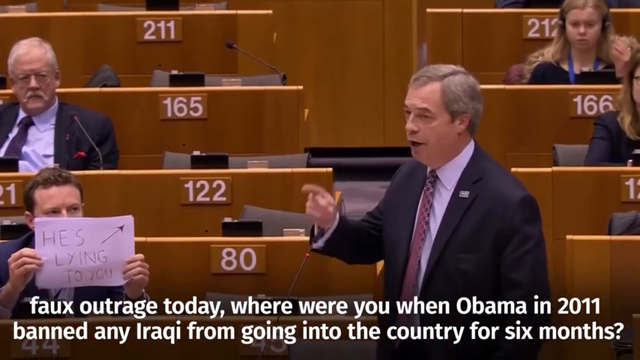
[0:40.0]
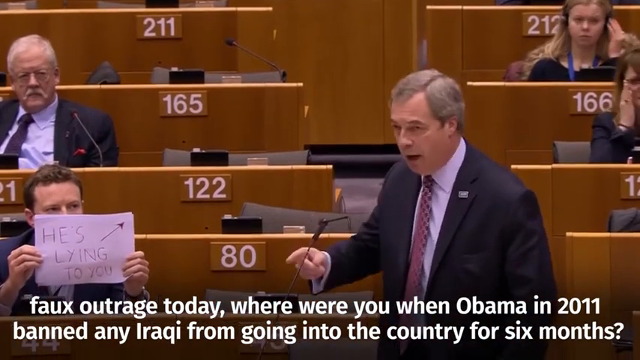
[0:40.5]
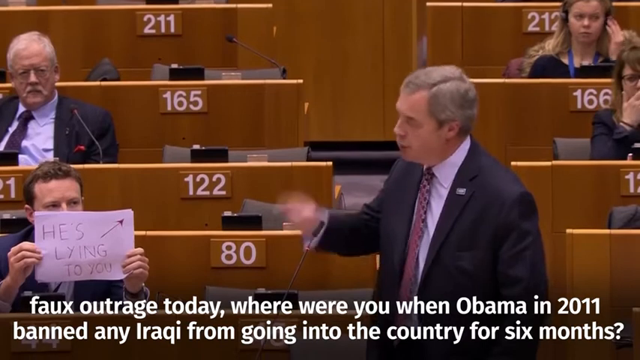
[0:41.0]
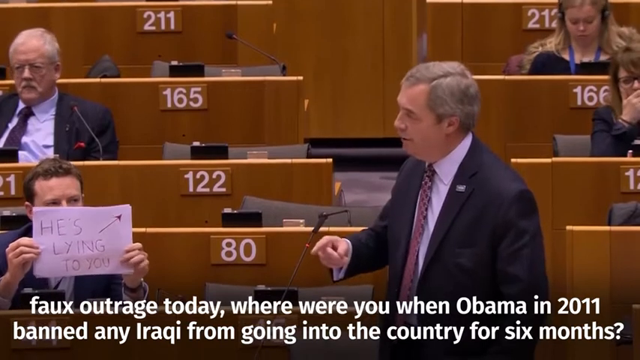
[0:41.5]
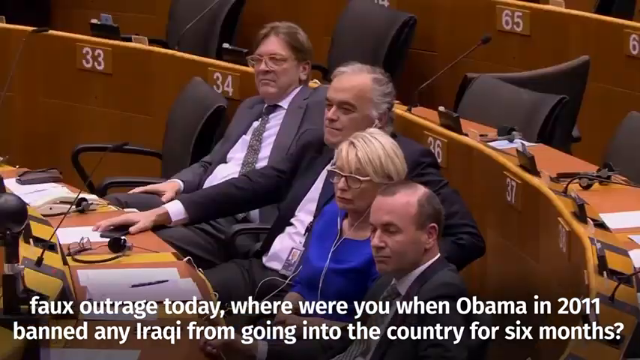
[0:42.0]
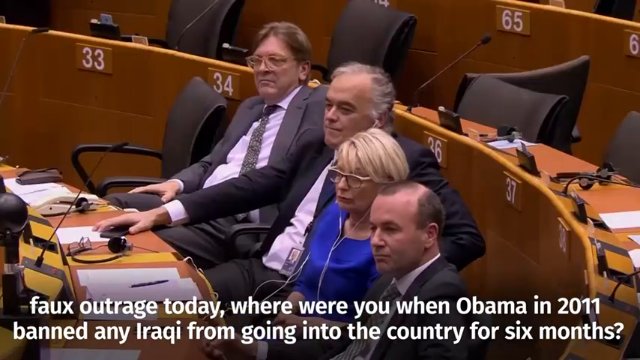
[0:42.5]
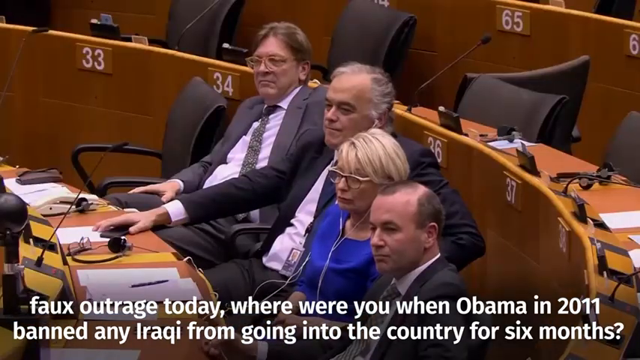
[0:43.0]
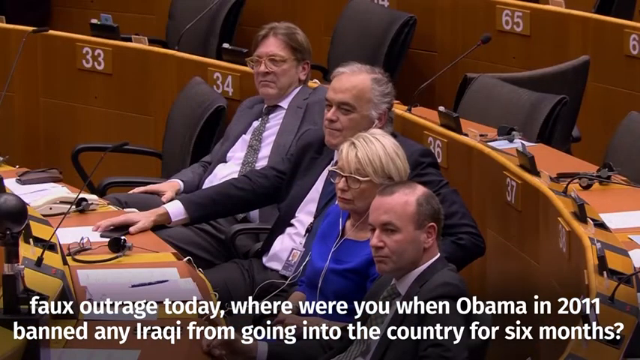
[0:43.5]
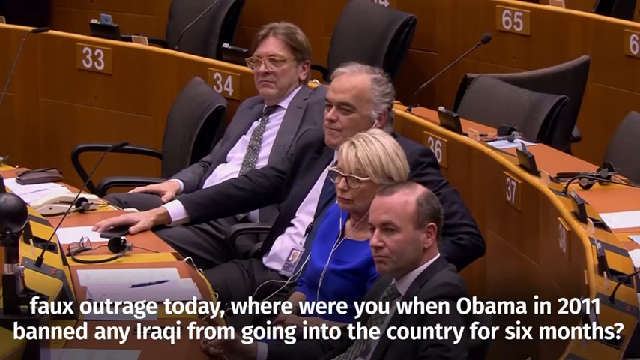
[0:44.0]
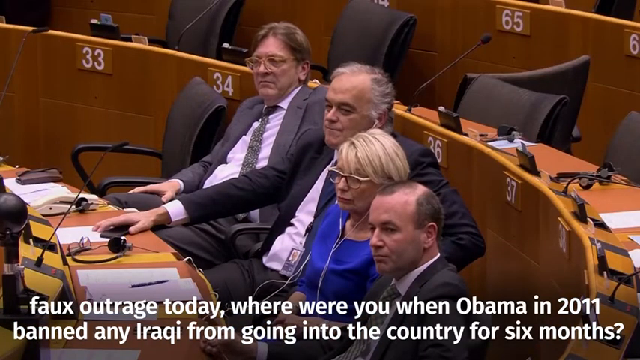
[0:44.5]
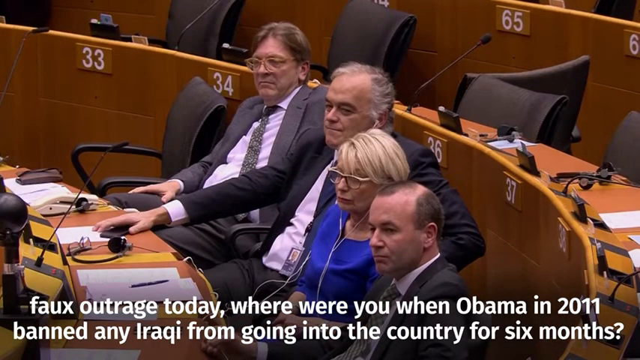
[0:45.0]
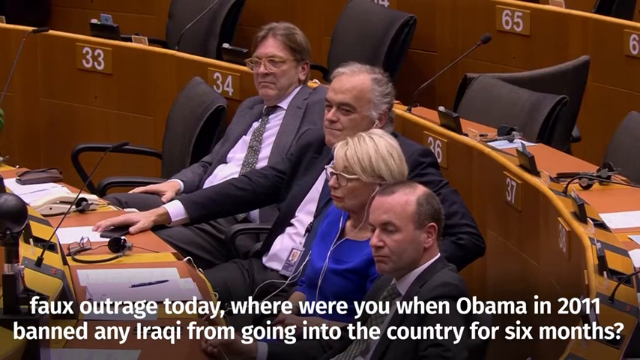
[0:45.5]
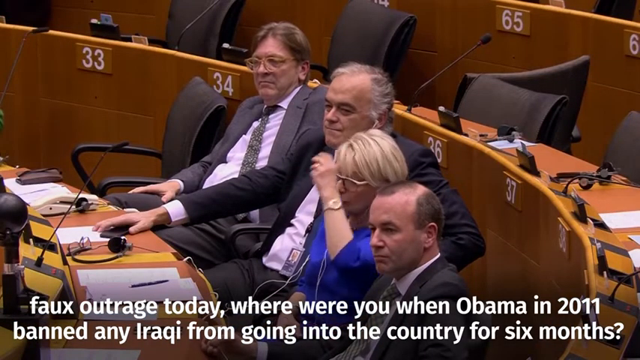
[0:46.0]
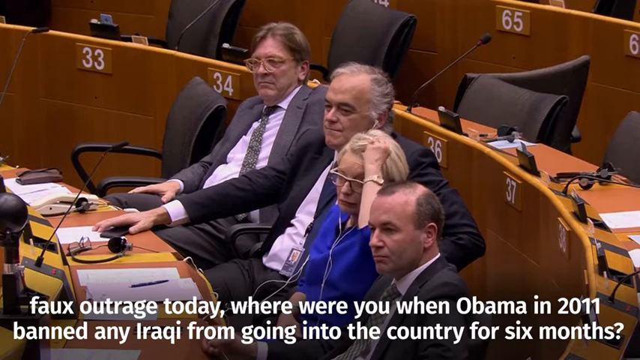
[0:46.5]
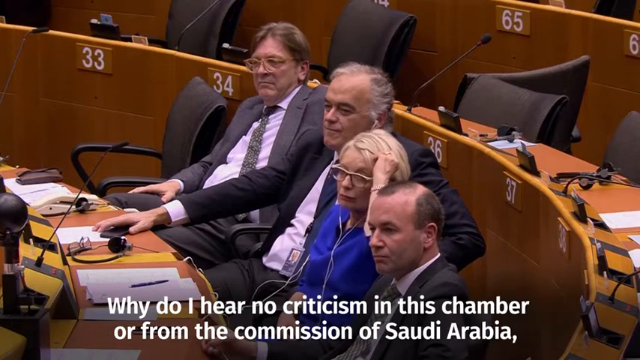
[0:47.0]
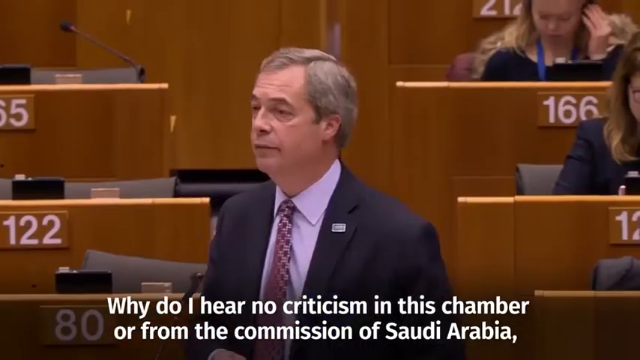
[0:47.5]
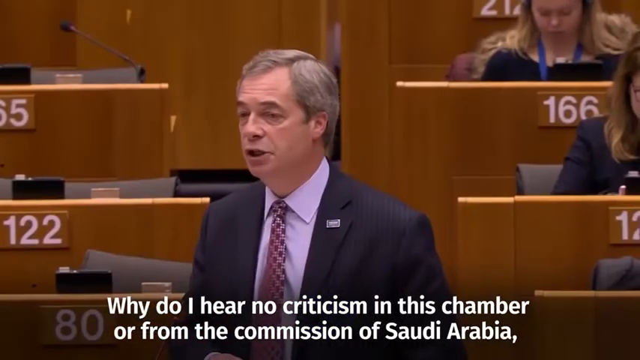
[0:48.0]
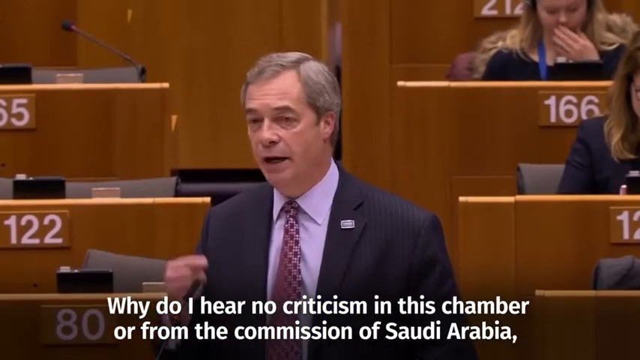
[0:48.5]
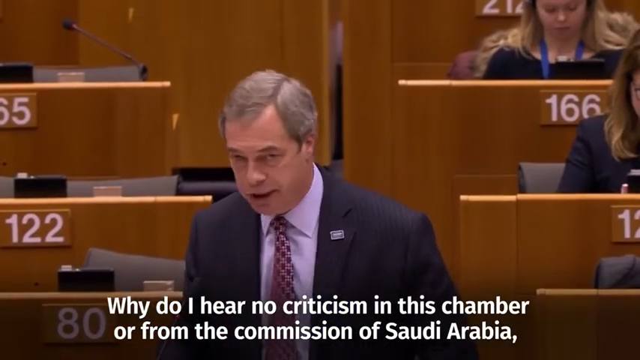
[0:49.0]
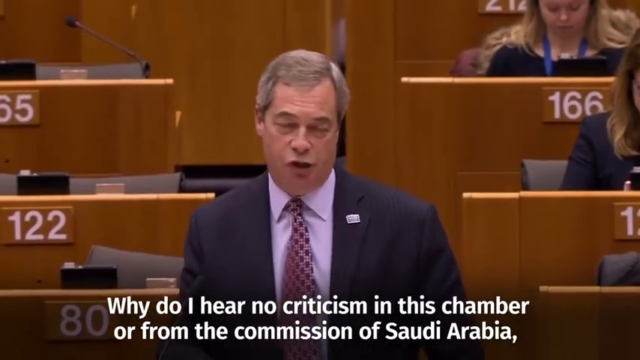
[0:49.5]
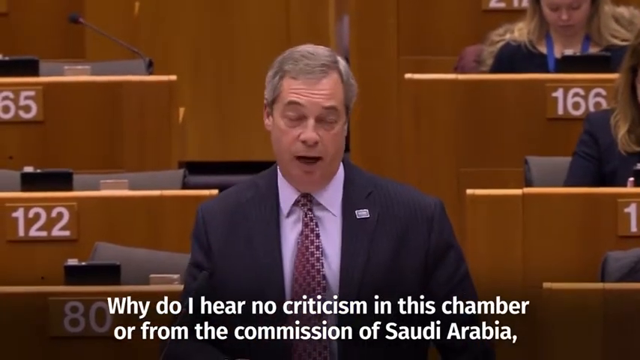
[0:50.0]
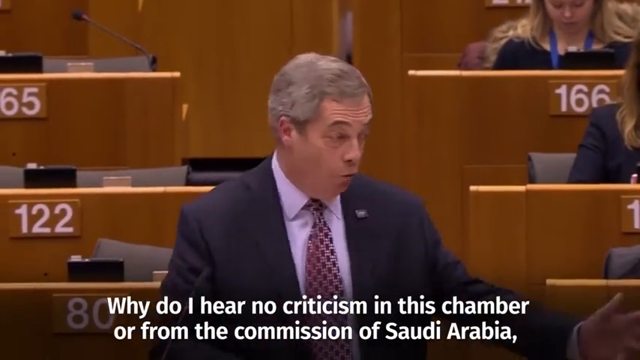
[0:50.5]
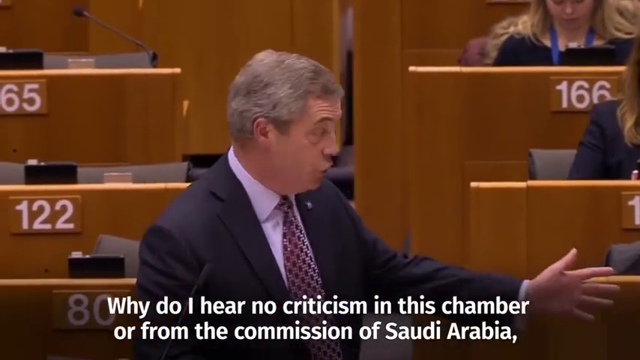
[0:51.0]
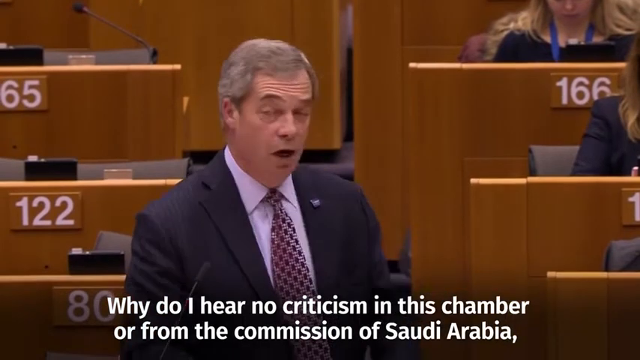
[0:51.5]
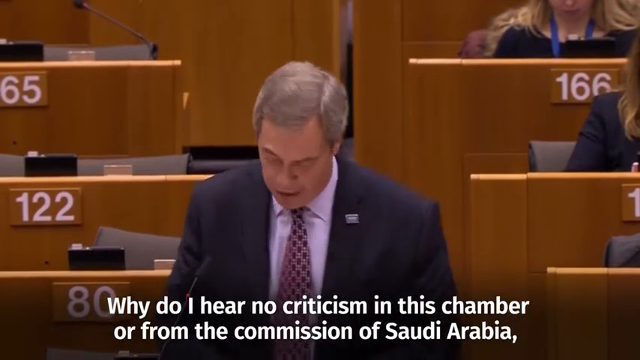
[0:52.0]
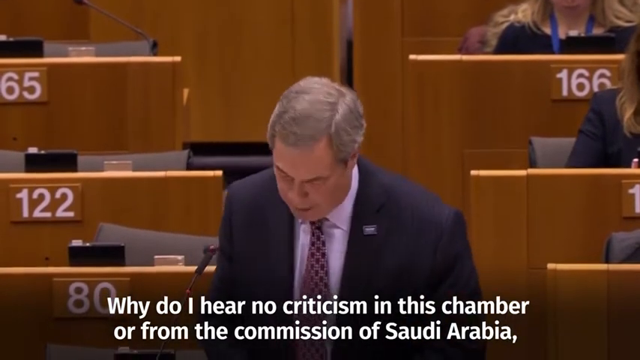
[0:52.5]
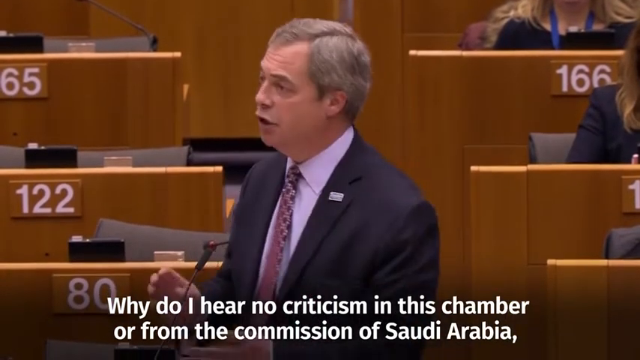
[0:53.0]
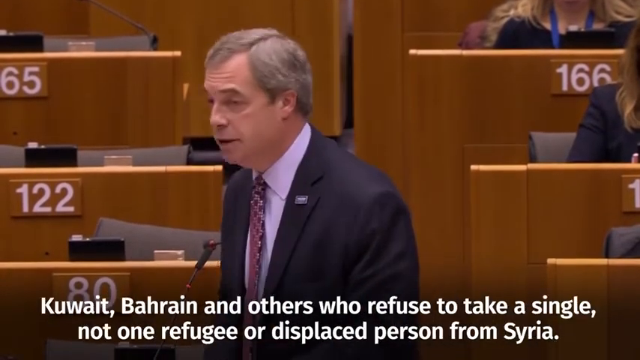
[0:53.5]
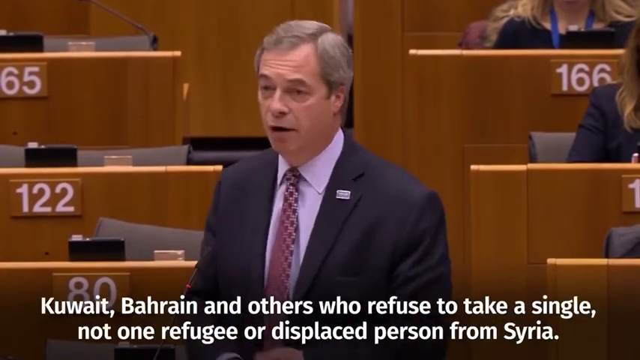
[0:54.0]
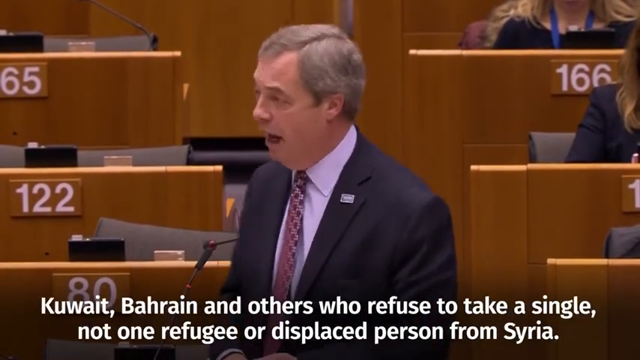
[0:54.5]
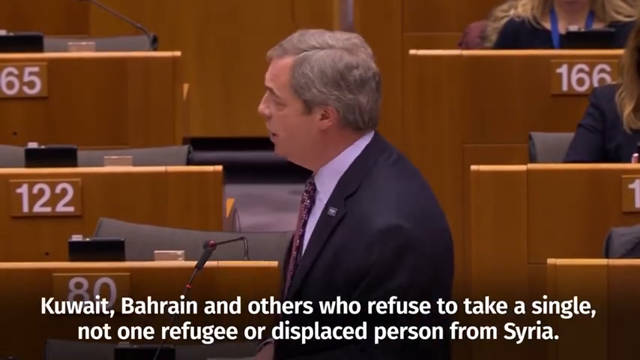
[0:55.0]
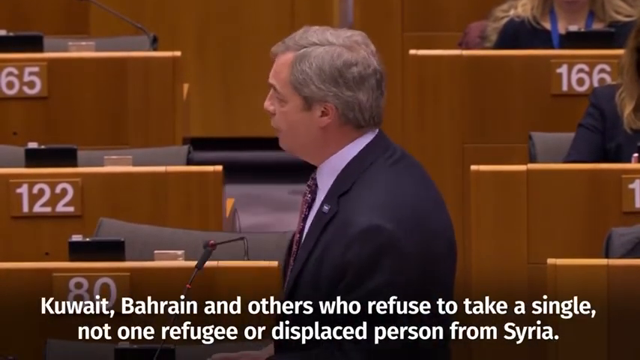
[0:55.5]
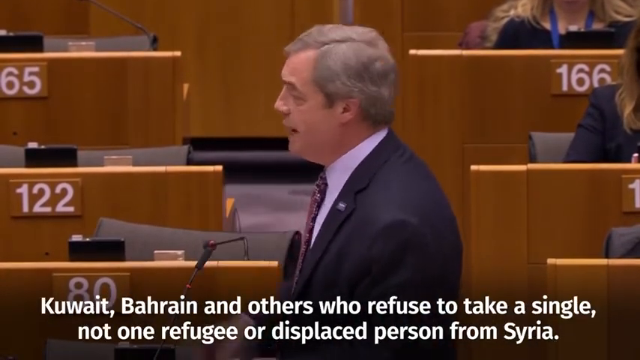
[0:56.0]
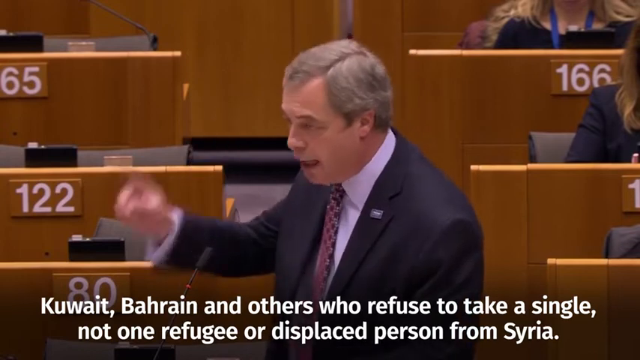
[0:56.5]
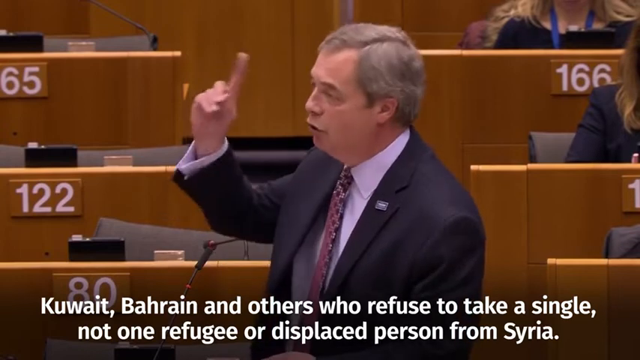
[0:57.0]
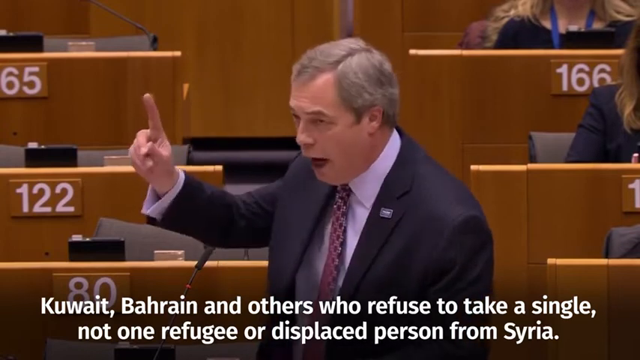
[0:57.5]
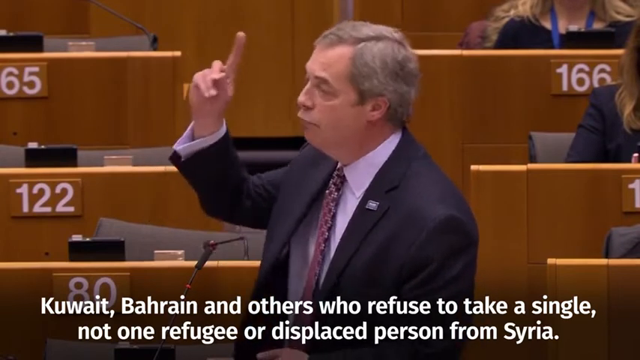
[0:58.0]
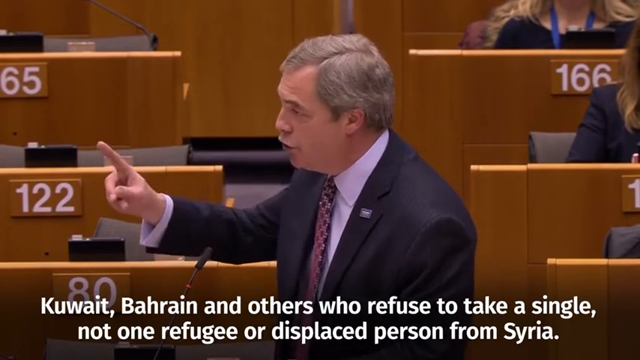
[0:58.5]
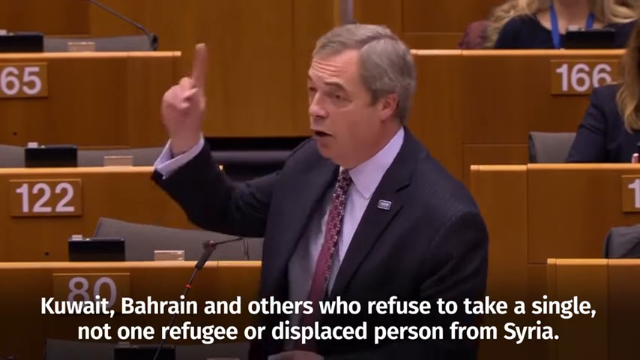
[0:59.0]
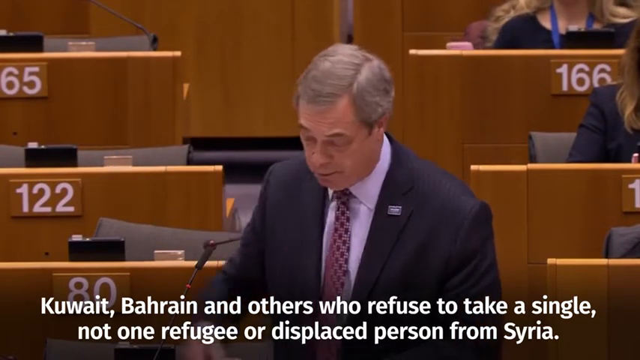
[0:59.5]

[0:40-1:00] A man gives a speech in a government room while people sit on benches, watching and trying to listen. Different colors are visible in the background, and numbers are written there, including 122.